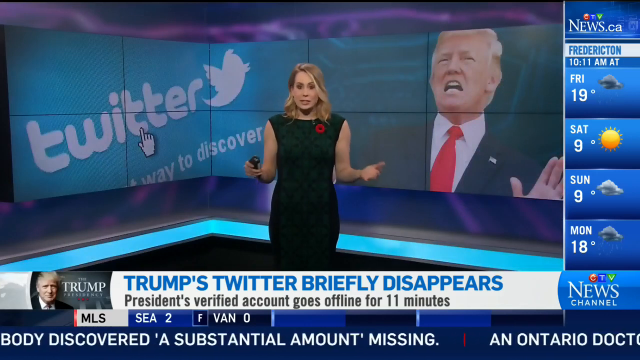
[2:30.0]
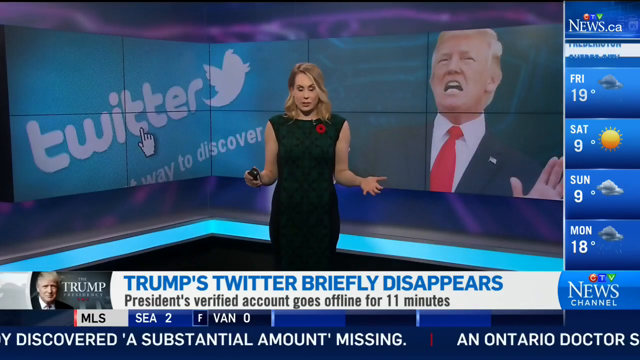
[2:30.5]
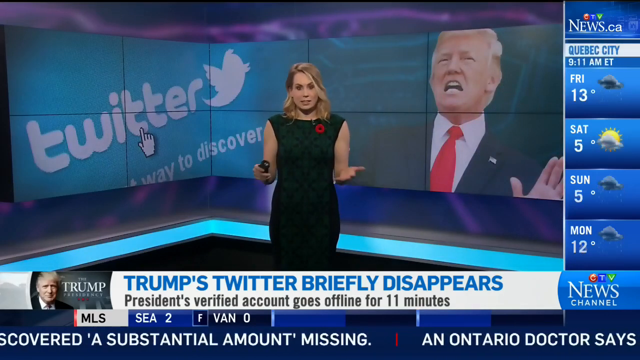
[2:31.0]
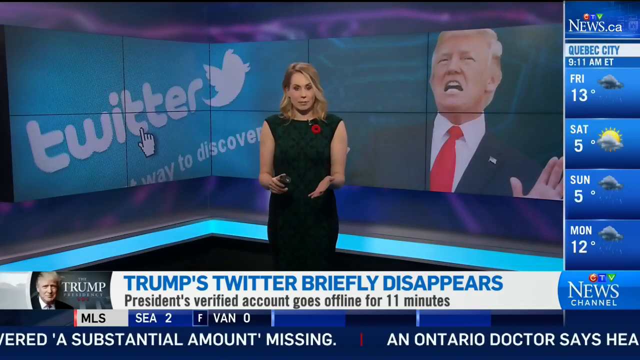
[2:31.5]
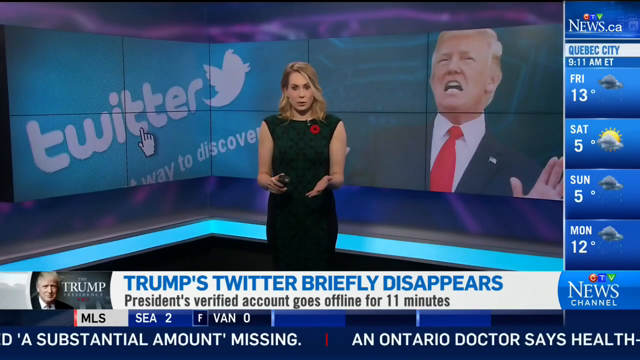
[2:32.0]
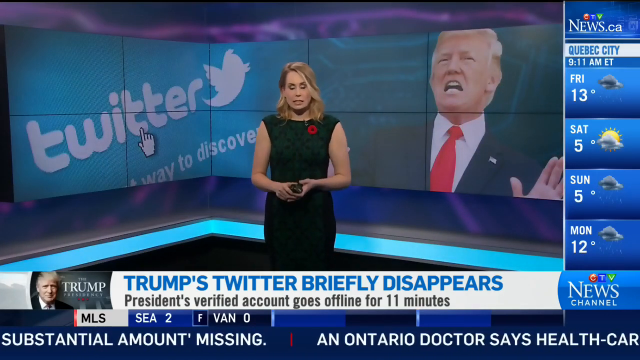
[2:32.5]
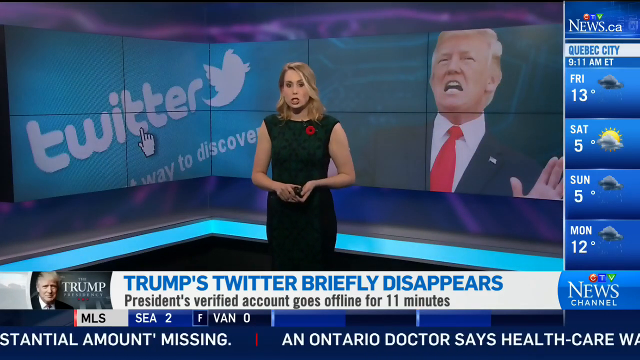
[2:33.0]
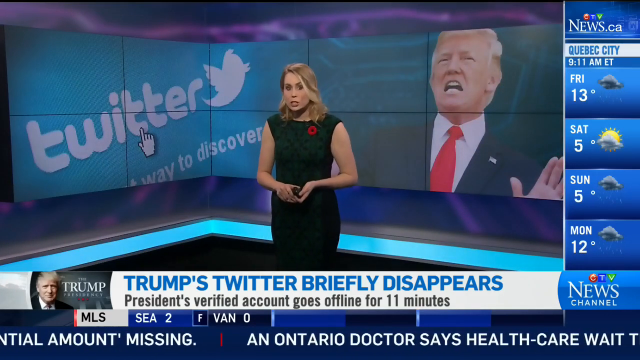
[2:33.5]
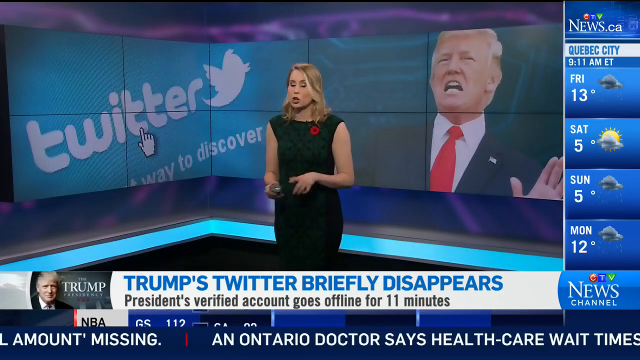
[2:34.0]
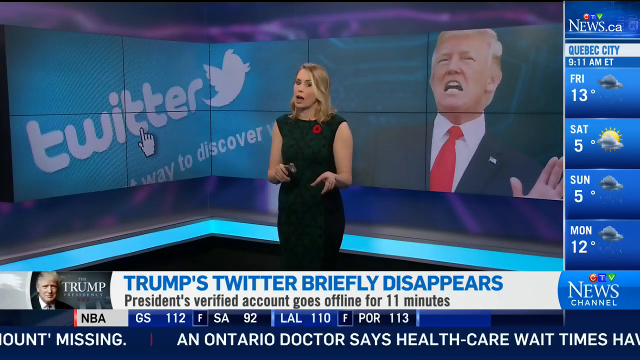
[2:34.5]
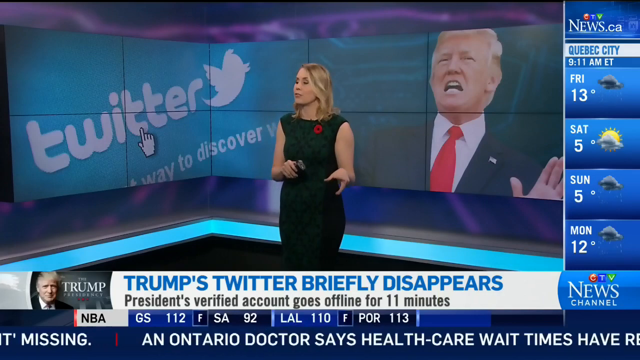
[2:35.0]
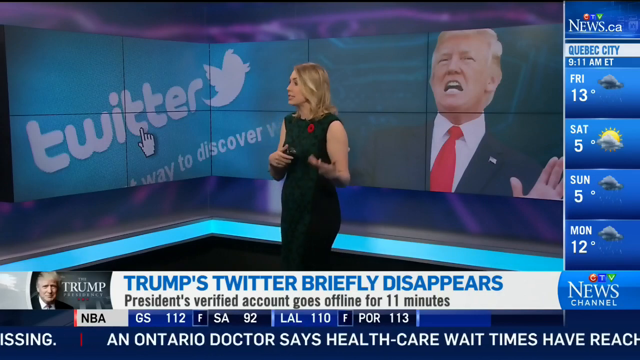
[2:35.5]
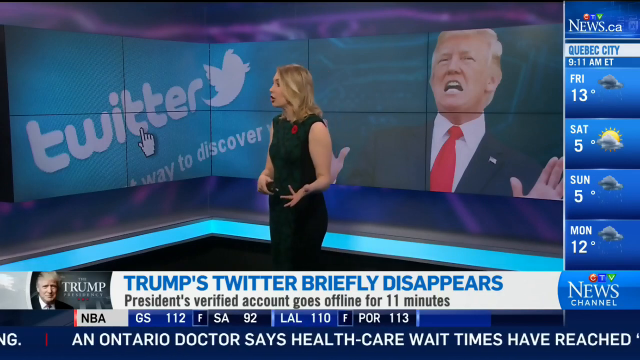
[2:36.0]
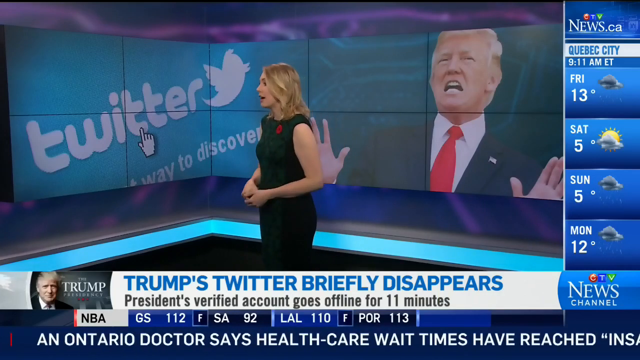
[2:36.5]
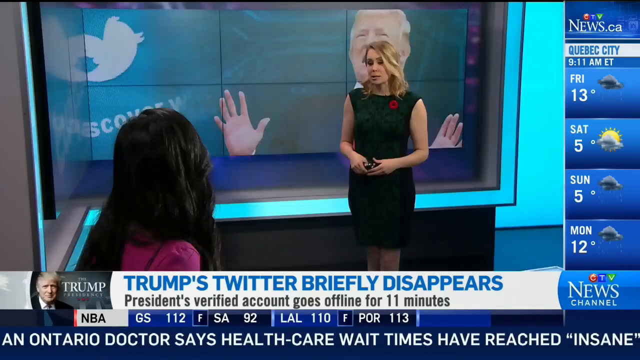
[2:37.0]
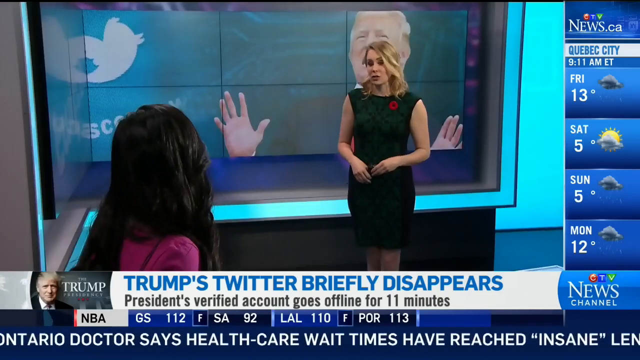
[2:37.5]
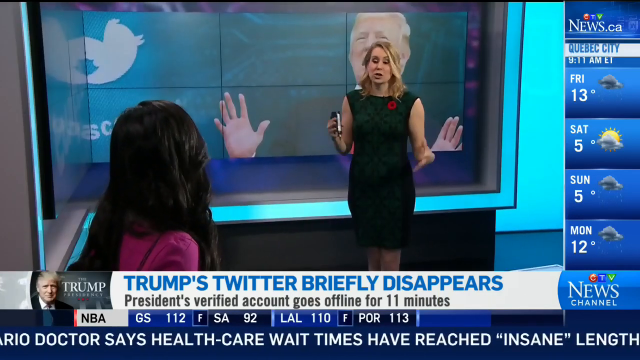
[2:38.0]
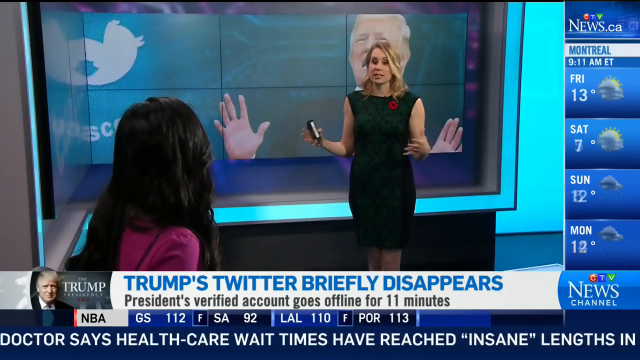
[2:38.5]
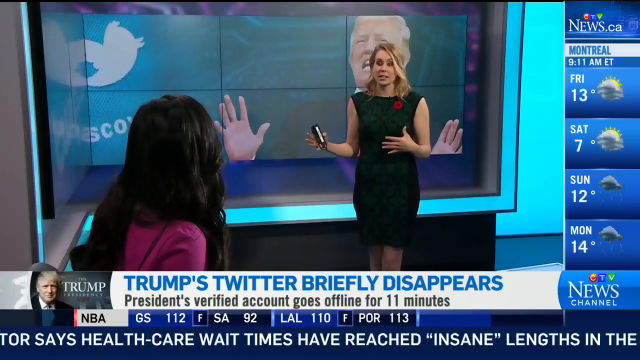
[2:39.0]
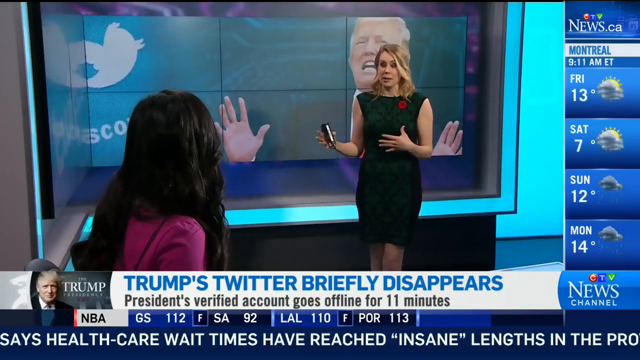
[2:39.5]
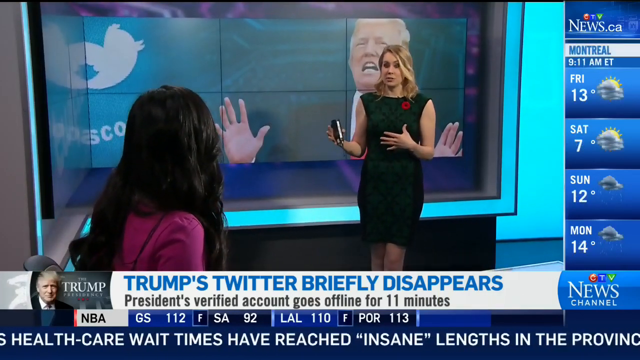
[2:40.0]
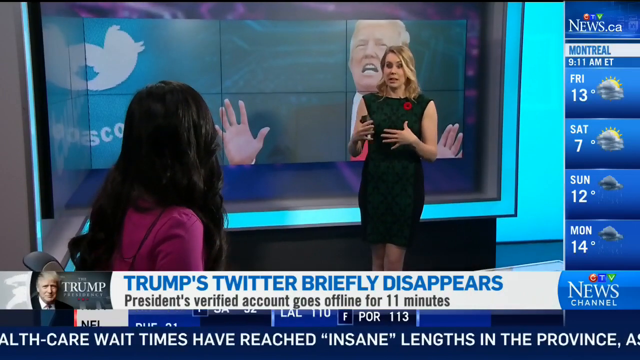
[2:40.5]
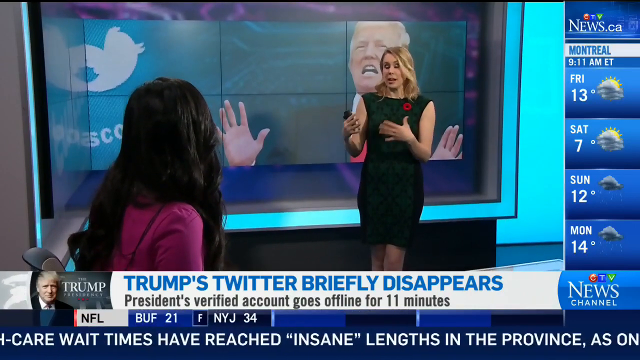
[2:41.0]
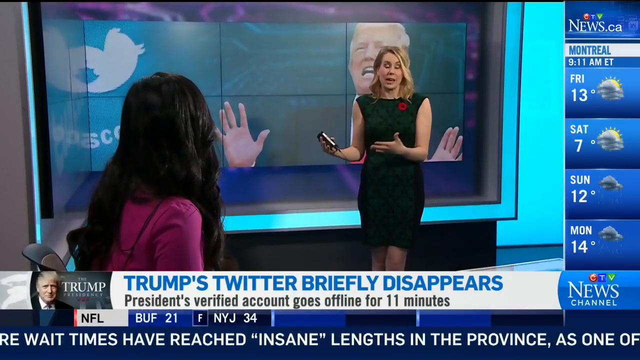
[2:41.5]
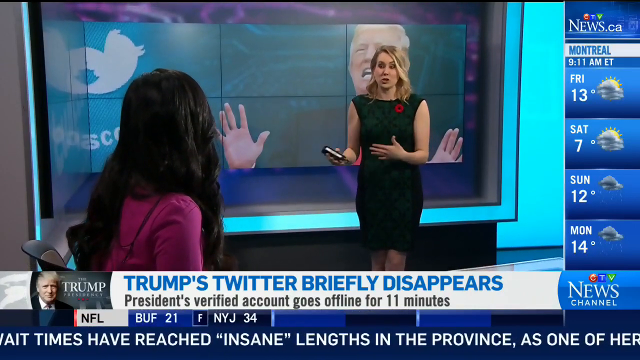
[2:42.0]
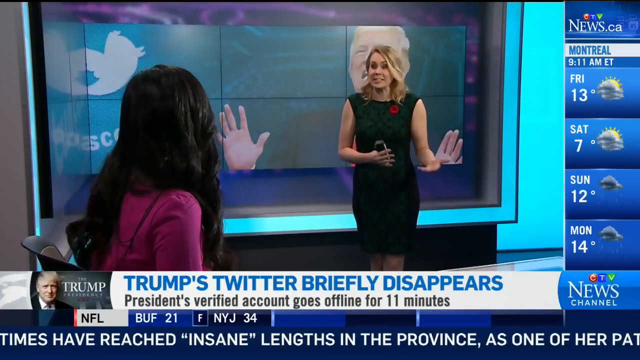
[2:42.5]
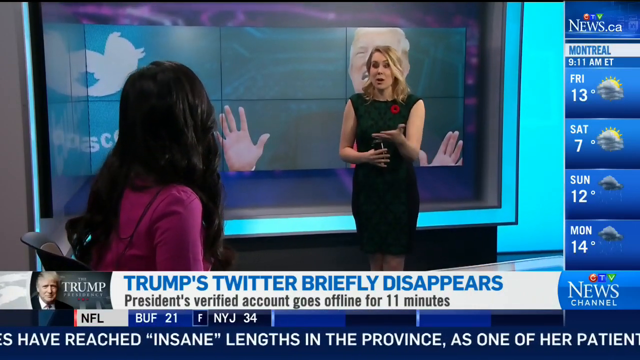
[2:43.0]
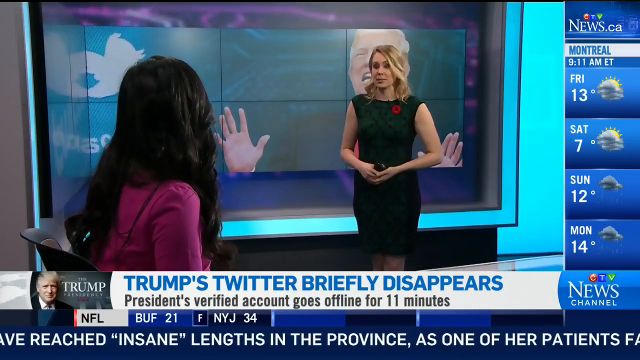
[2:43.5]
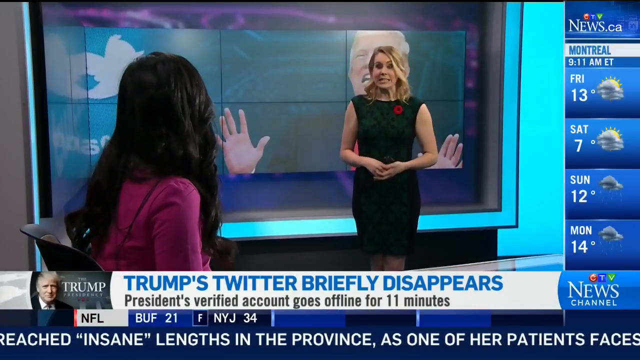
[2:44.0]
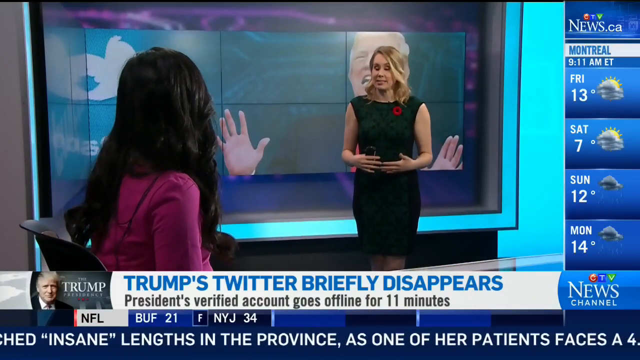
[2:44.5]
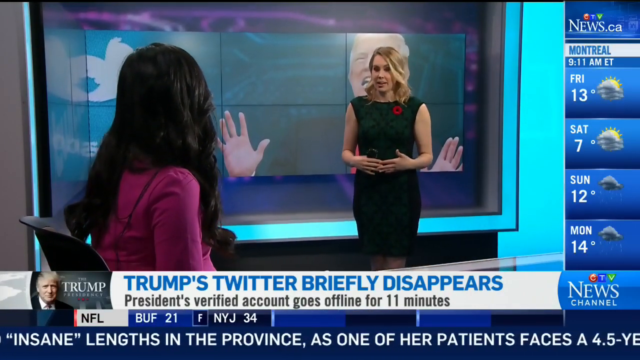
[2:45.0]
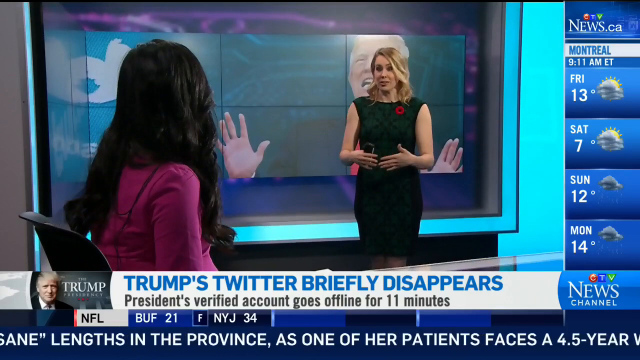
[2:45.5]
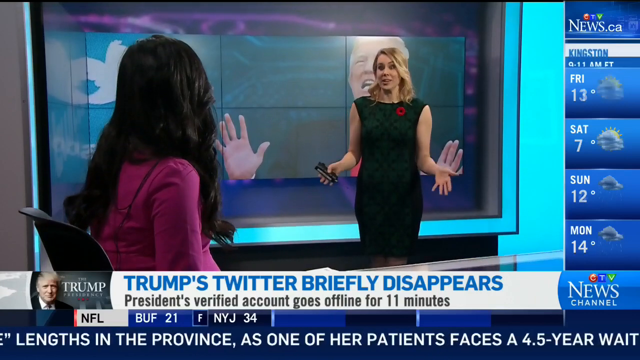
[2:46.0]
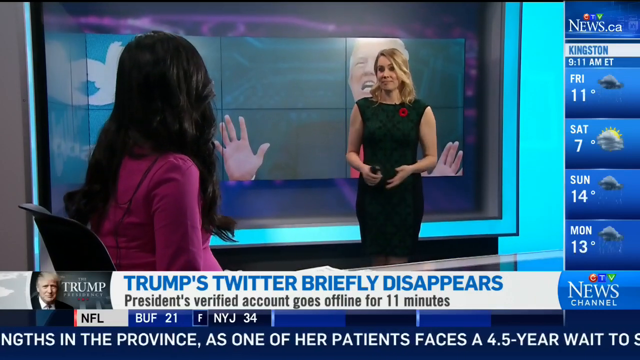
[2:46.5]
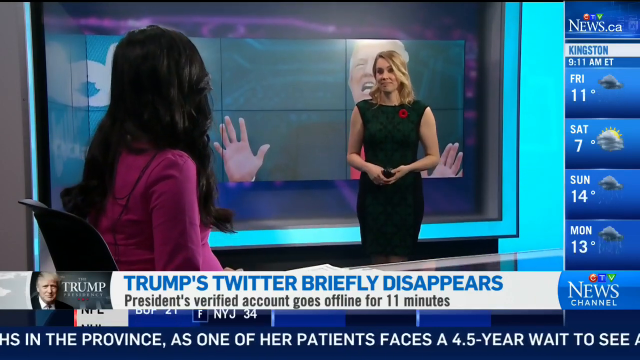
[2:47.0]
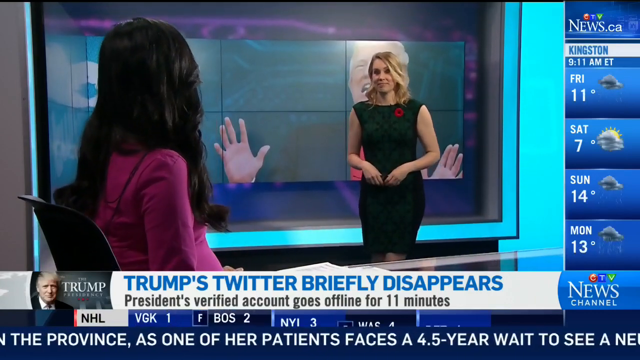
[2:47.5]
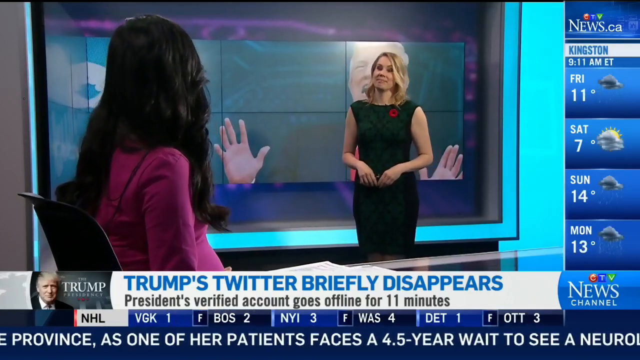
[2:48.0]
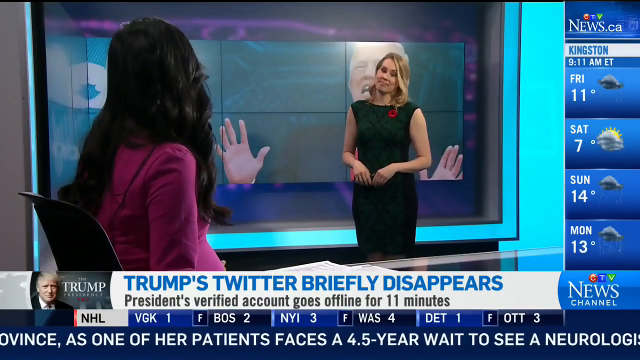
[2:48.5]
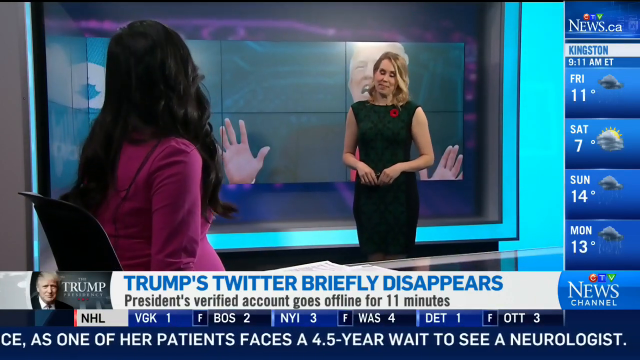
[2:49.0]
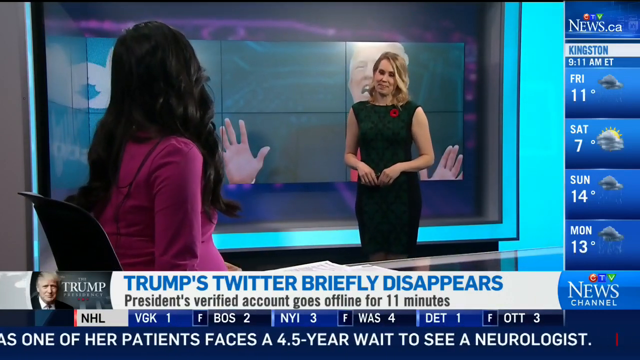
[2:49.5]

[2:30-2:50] The woman in the sleeveless dress is shown speaking, with the picture of Donald Trump and the Twitter logo on the large screen behind her. The object in her left hand now looks like a cell phone rather than a microphone. The shot cuts to her talking to the other reporter, and the object is easier to see: it looks like a square object with gold trim on the side, possibly a phone or some other type of microphone. Purple and teal coloring surrounds the screen. The bottom of the screen is still running, with a news crawl reading "Ontario doctor says healthcare wait times have reached an insane length in the province. As one of her patients faces a 4.5 year wait to see a neurologist." The weather column on the right gives updates for Quebec City, mostly cloudy, and for Montreal, cloudy, sunny and rainy. Hockey updates also appear at the bottom of the screen.